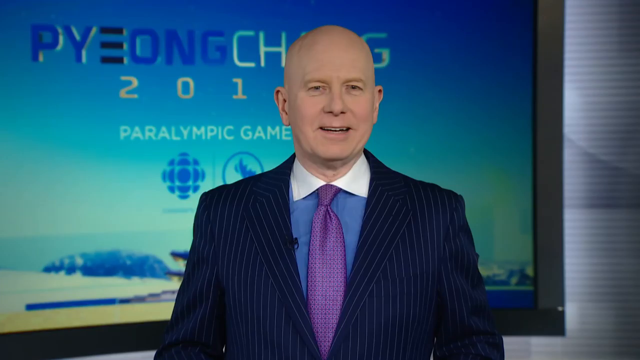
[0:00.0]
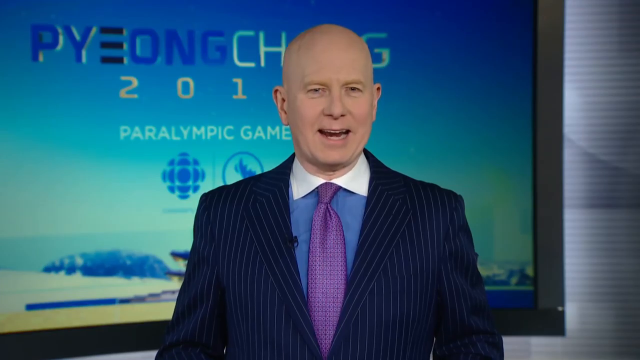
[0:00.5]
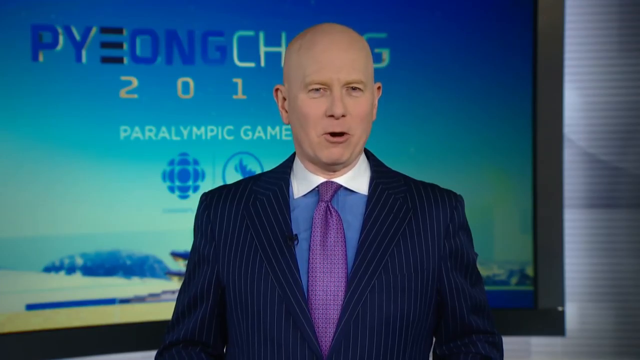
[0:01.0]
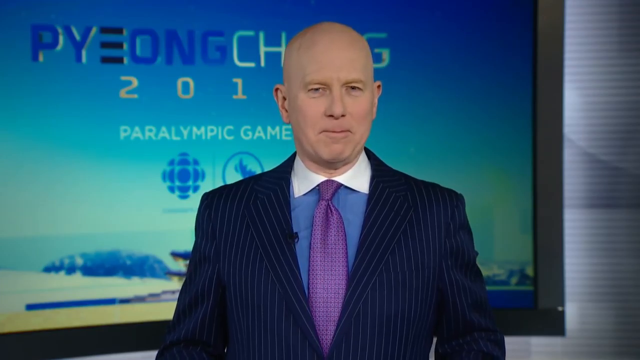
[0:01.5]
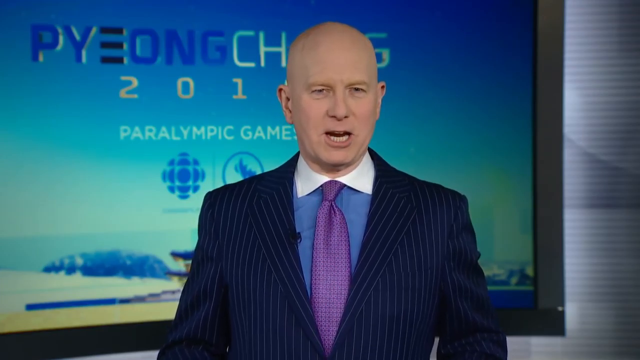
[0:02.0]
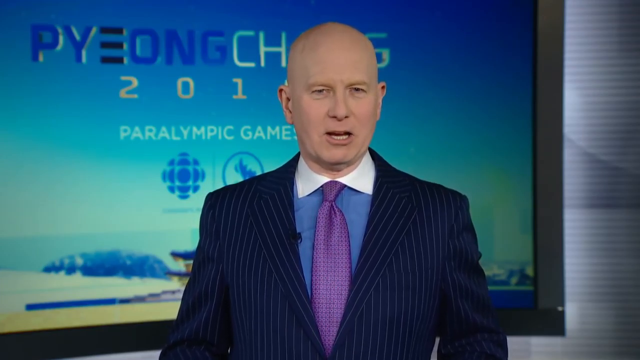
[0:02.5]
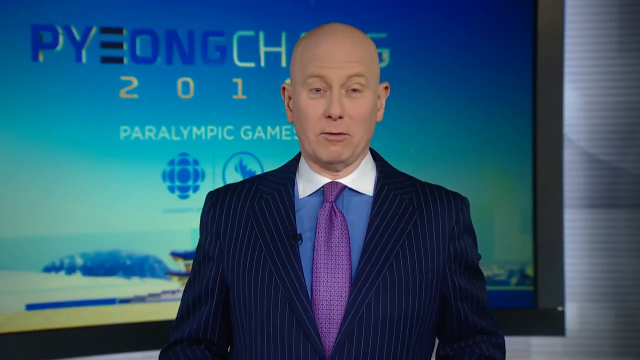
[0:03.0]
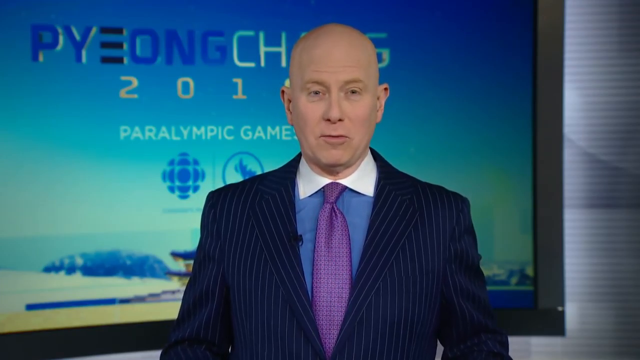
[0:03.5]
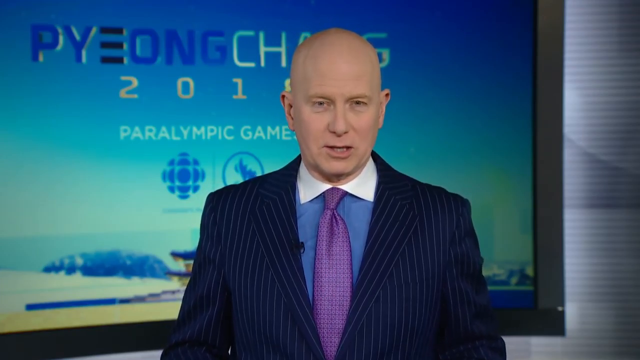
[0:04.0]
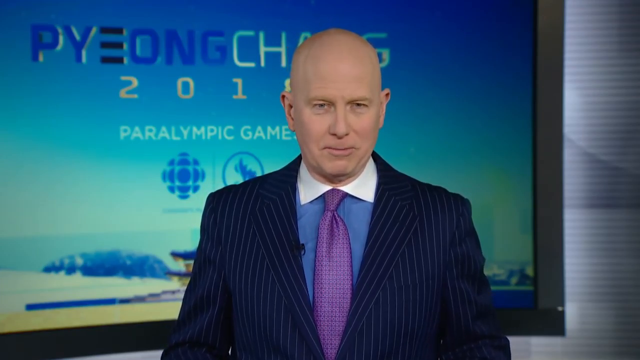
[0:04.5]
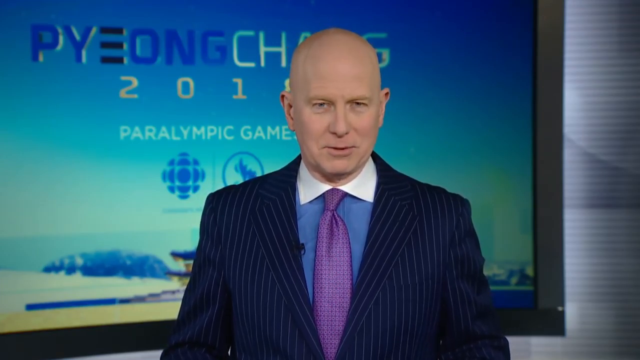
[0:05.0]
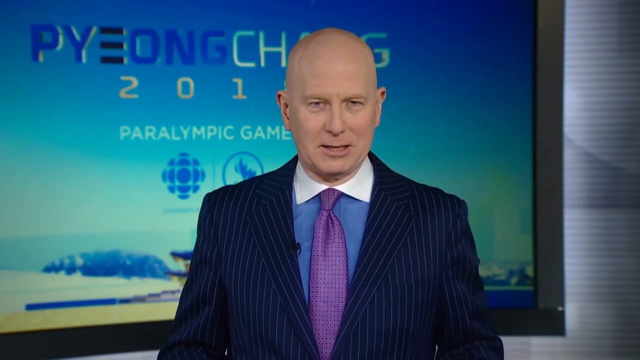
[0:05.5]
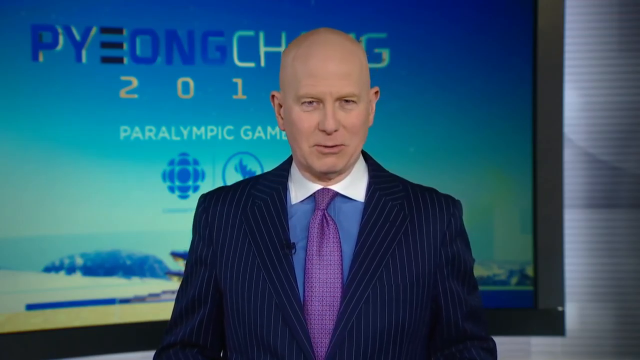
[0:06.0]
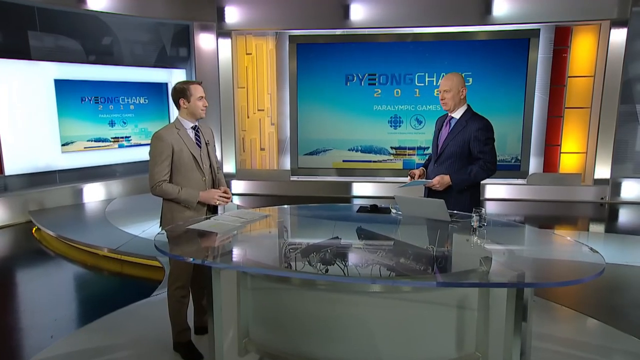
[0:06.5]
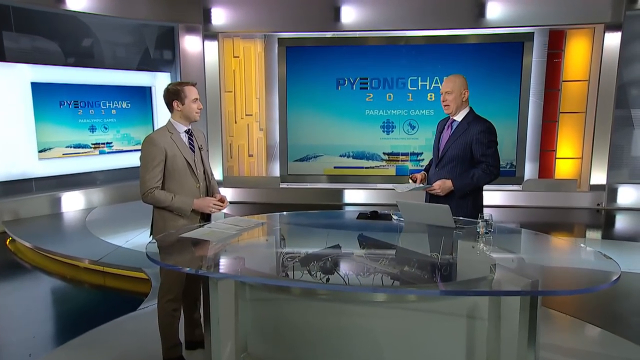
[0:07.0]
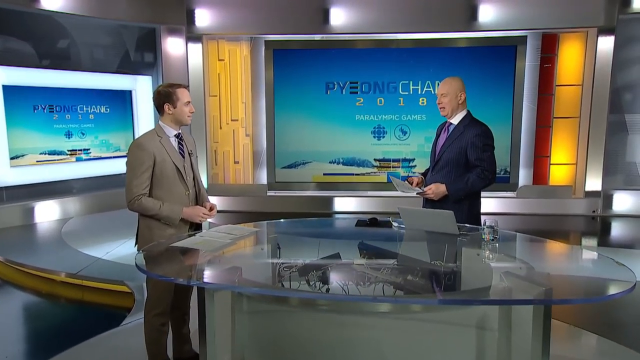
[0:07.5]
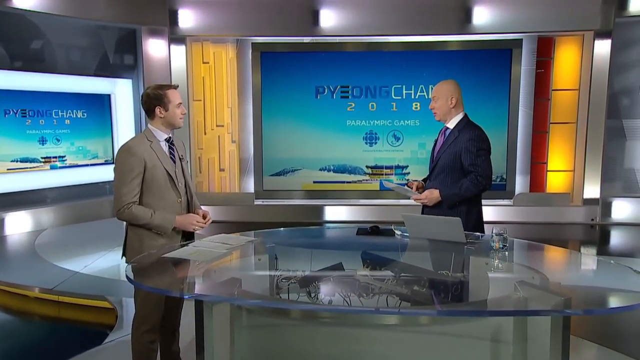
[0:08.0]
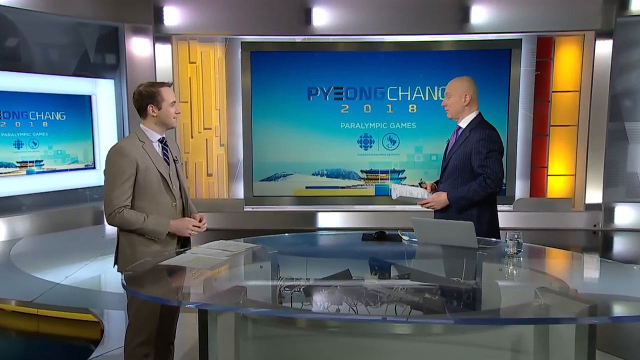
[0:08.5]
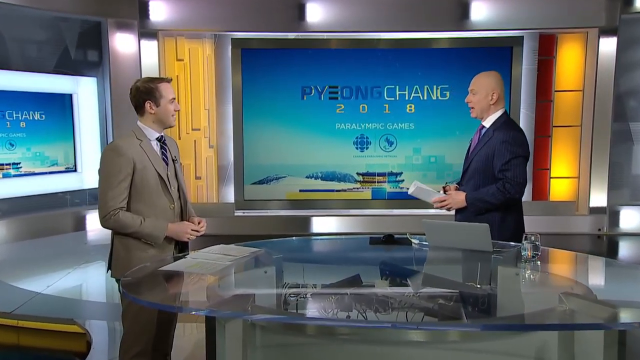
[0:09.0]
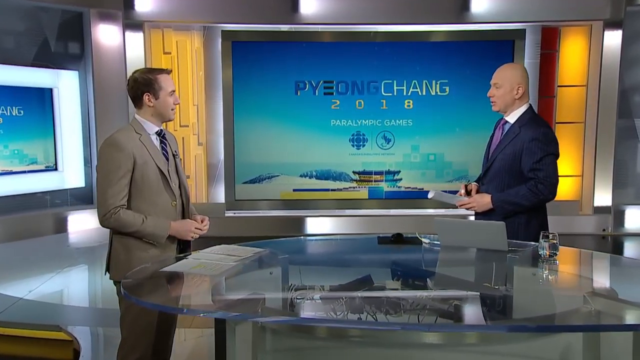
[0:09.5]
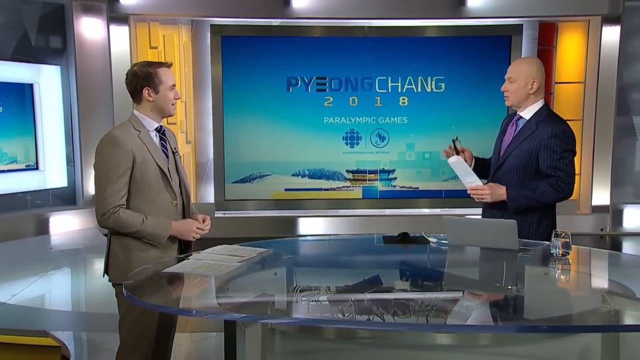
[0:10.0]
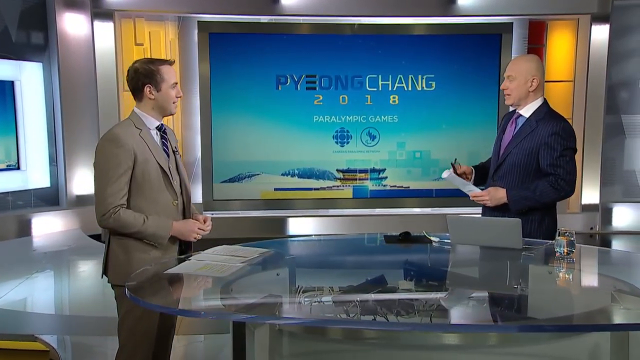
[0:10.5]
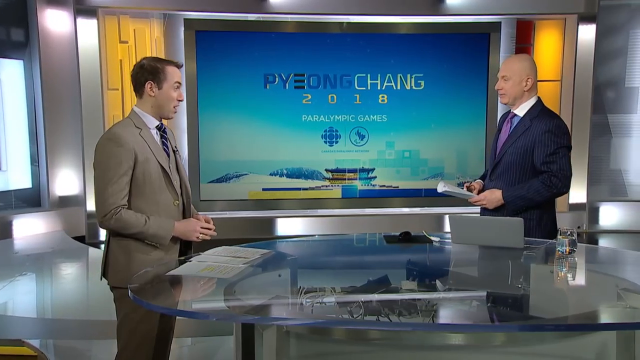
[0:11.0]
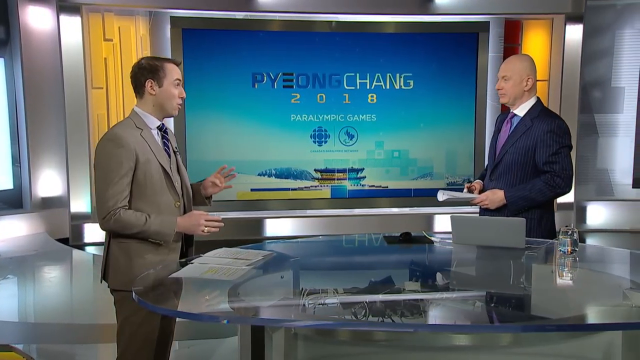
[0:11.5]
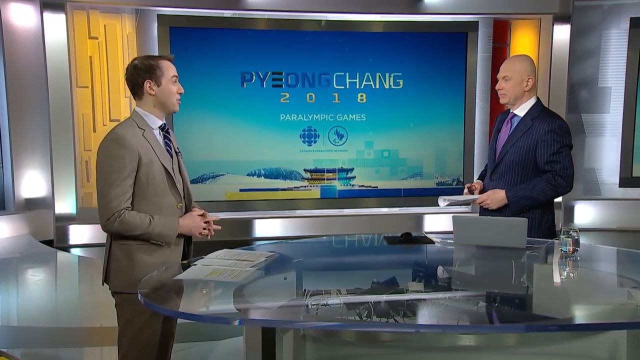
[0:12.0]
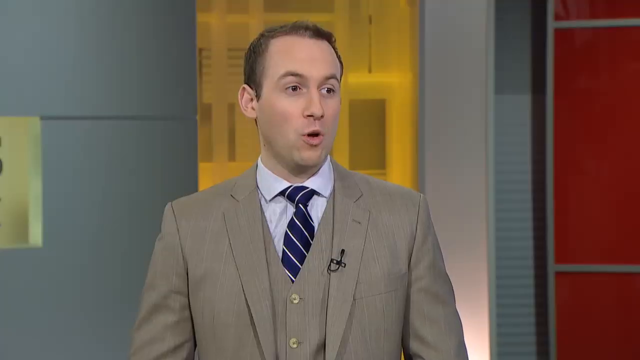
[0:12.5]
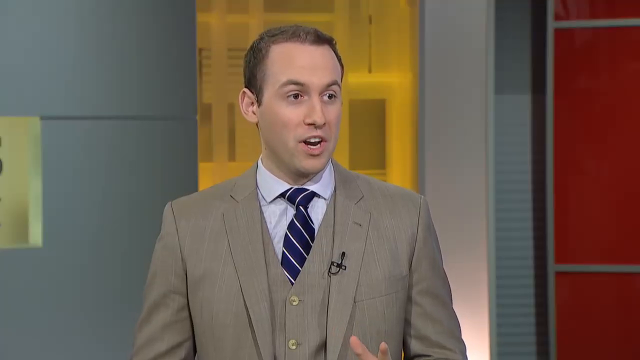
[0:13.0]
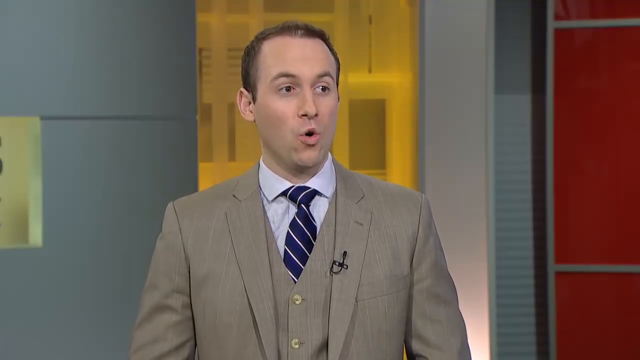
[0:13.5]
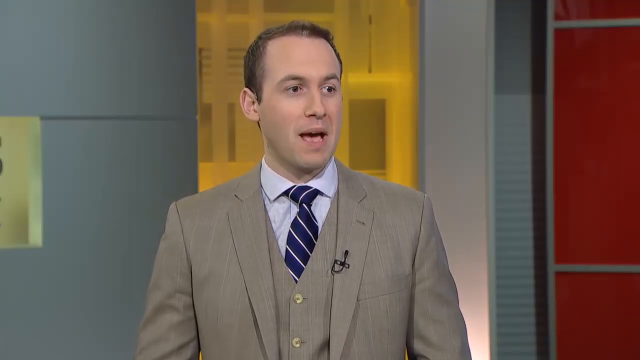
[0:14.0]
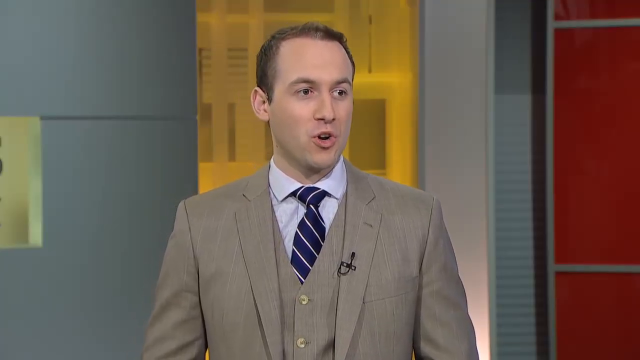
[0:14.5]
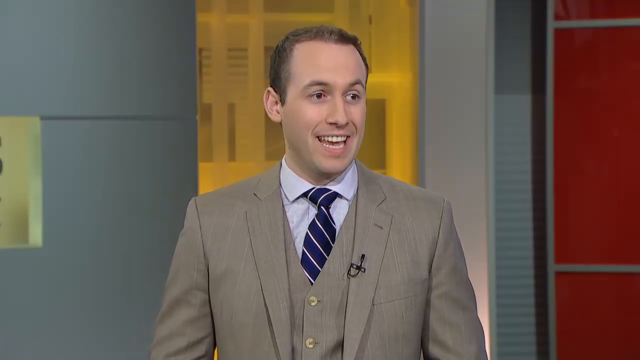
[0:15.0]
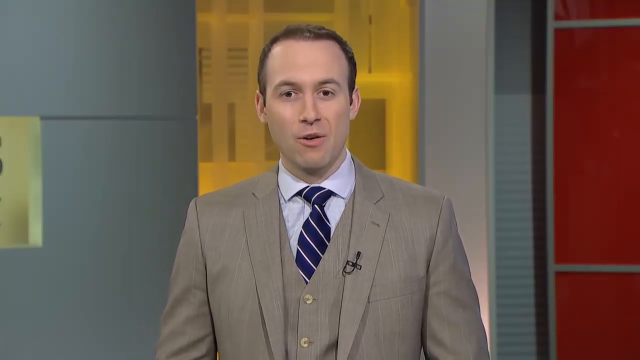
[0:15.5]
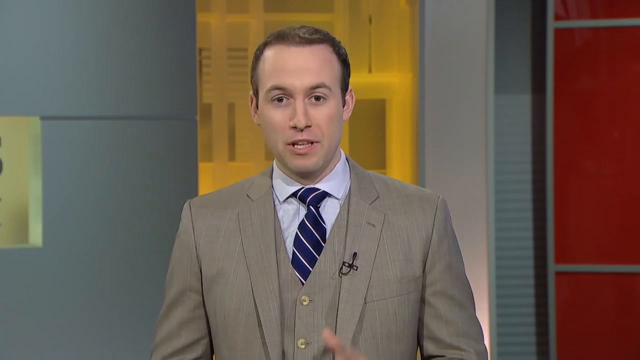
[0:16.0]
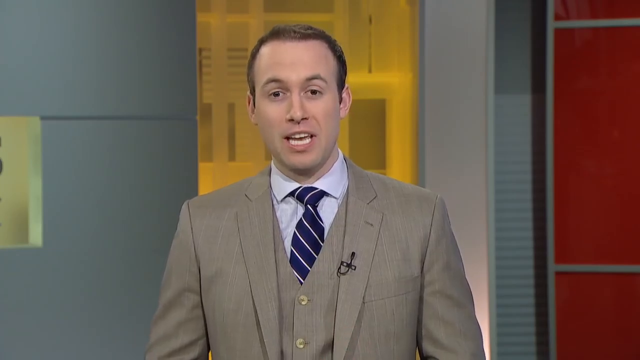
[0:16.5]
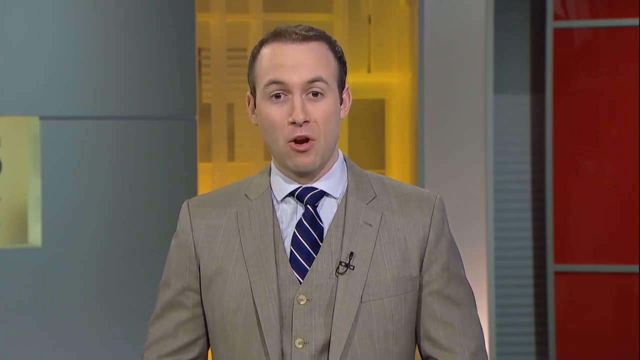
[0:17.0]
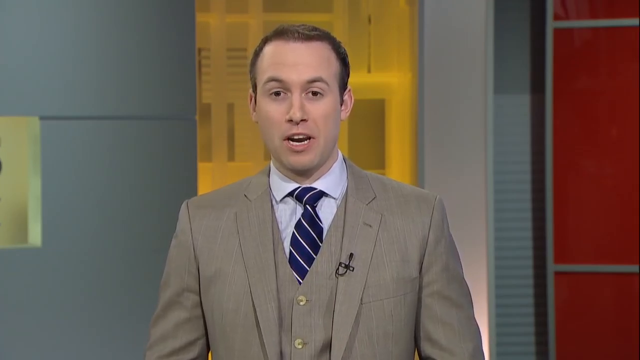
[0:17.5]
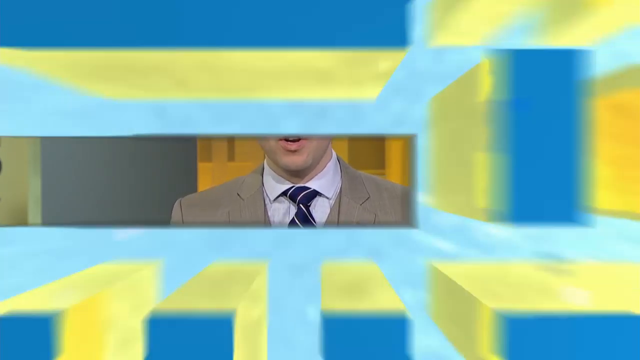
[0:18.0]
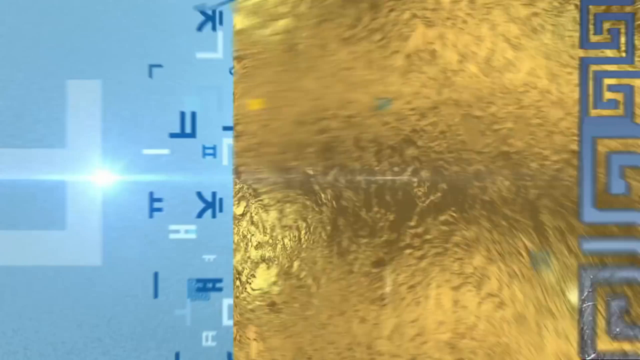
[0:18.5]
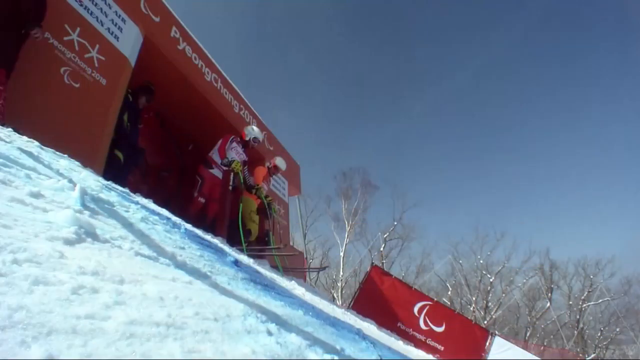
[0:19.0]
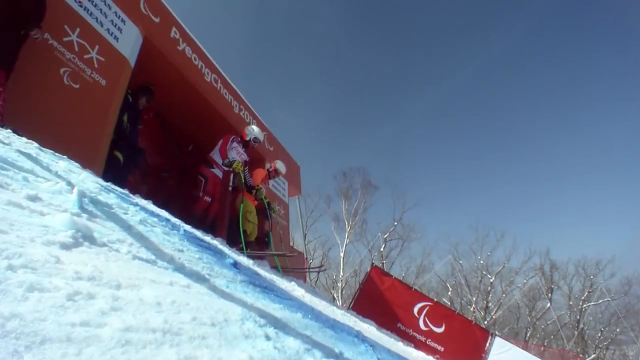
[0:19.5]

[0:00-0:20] Against a blue background that looks kind of like a sky, a newscaster appears in front of a background screen showing PyeongChang and the Paralympic Games, with a CBC symbol and what is kind of like a Canadian team symbol. He wears a blue pinstripe suit, a periwinkle blue collared shirt with a white collar, and a purple tie. He is Caucasian and bald. He is talking, his mouth moving, and his eyebrows are raised, as if he is saying something that might be surprising to the audience. The scene transitions to a media newsroom, where the bald reporter is now standing on the right beside another reporter who wears a beige shirt, a white-collared shirt and what looks like maybe a dark pinstripe tie. This second man has brown hair with a slightly receding hairline, and he is also standing in front of a screen that says "PyeongChang". There are lots of lights, and the set looks kind of grayish with some yellow and red elements. The bald man holds what looks like a script or some sort of paper in his left hand and something in his right hand.